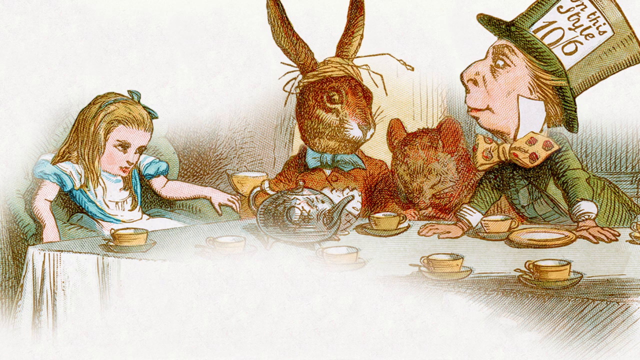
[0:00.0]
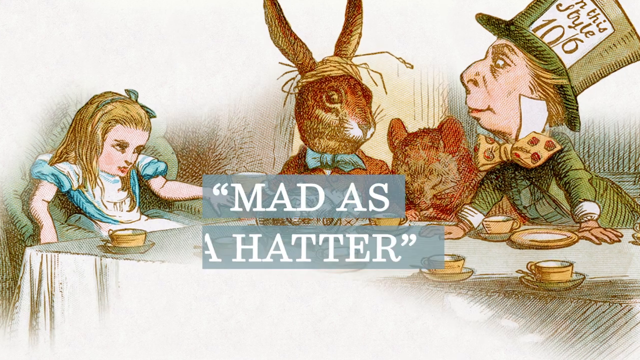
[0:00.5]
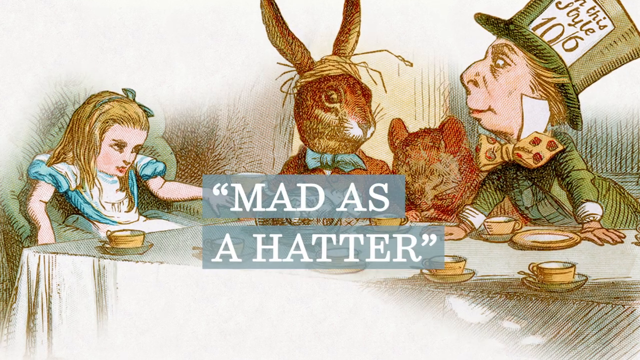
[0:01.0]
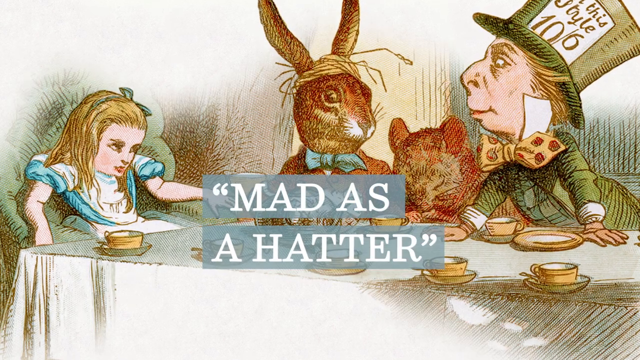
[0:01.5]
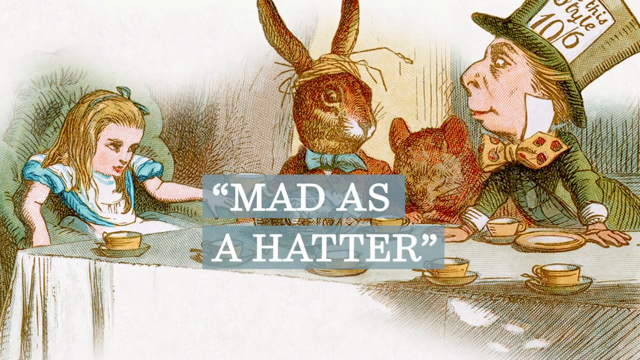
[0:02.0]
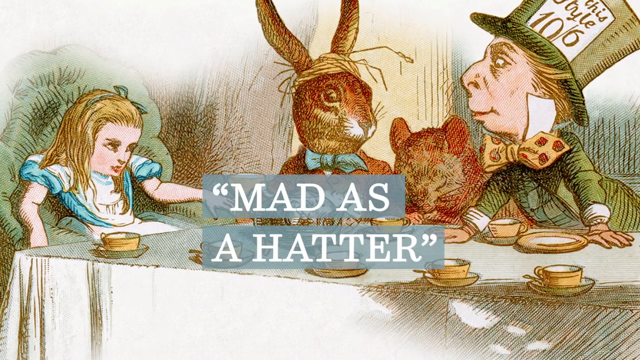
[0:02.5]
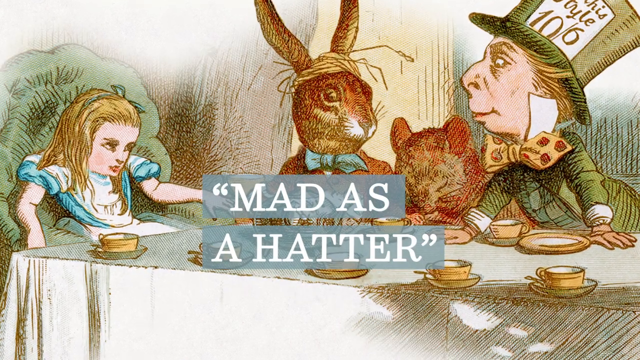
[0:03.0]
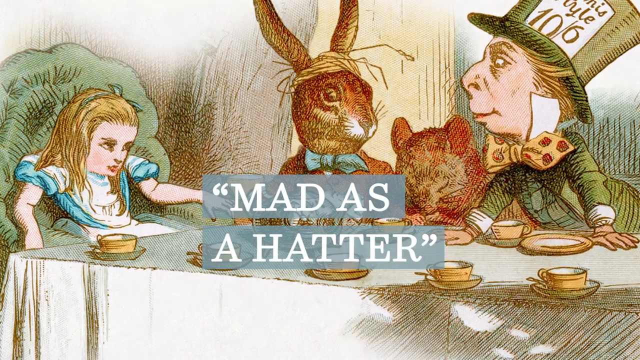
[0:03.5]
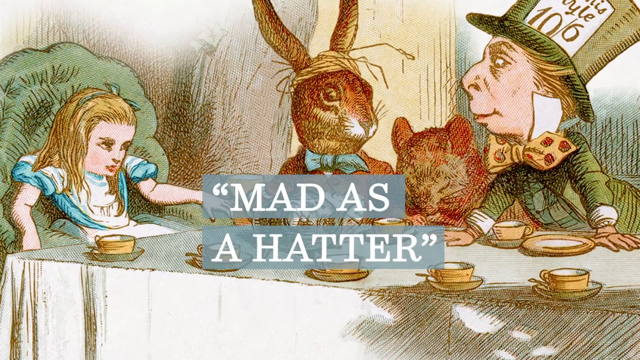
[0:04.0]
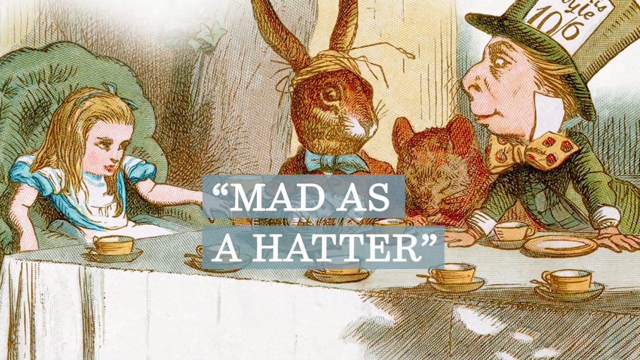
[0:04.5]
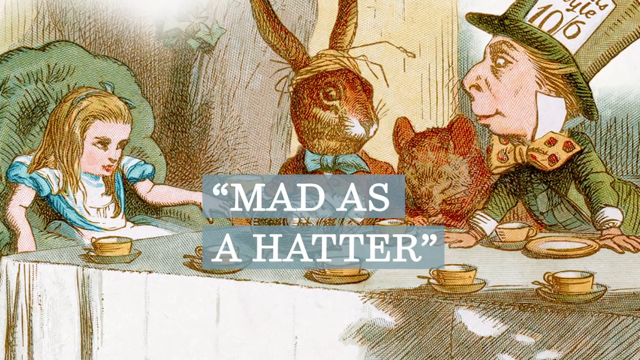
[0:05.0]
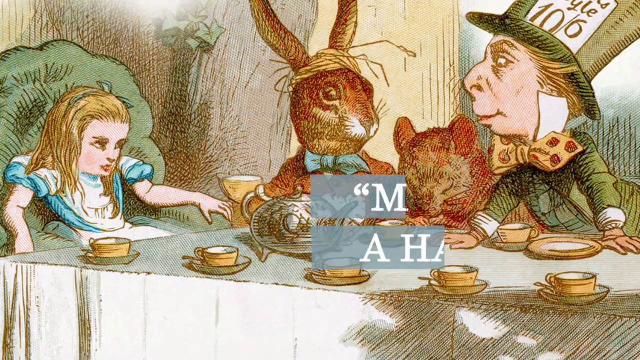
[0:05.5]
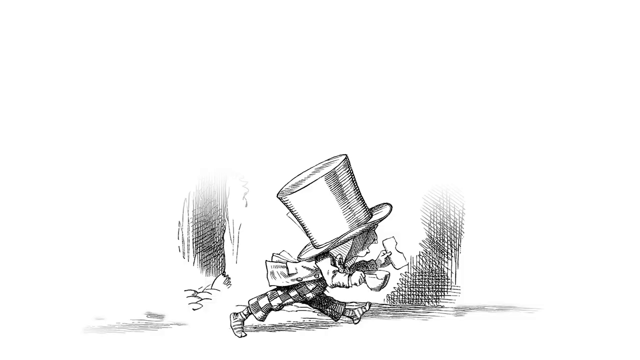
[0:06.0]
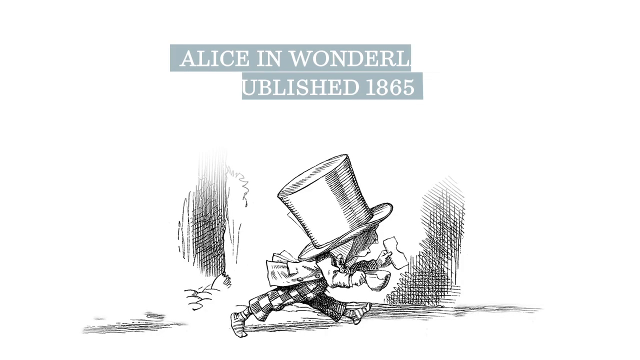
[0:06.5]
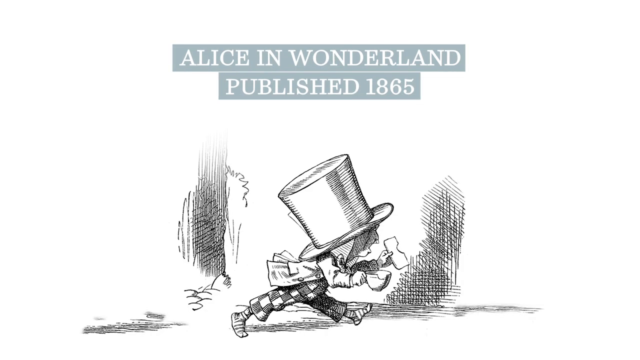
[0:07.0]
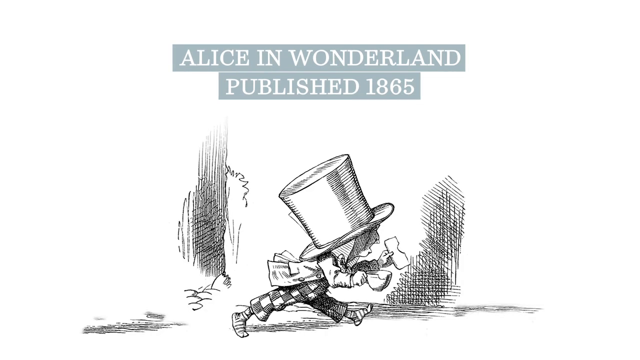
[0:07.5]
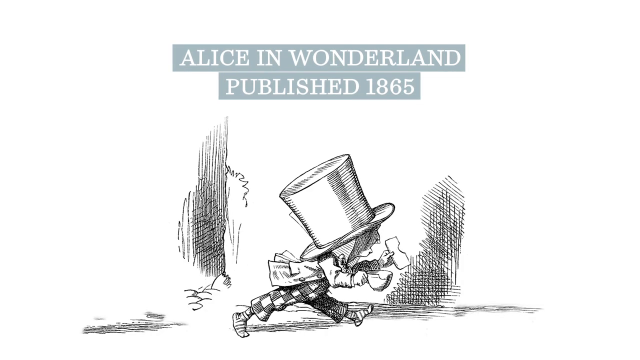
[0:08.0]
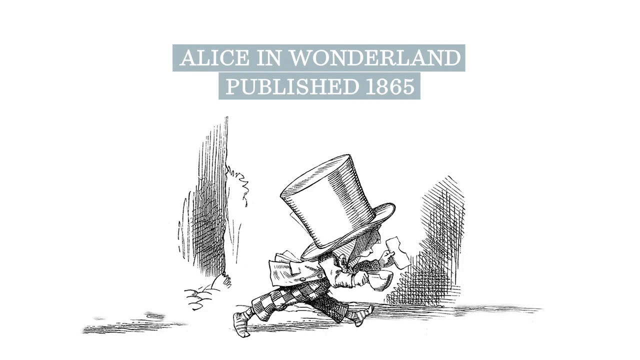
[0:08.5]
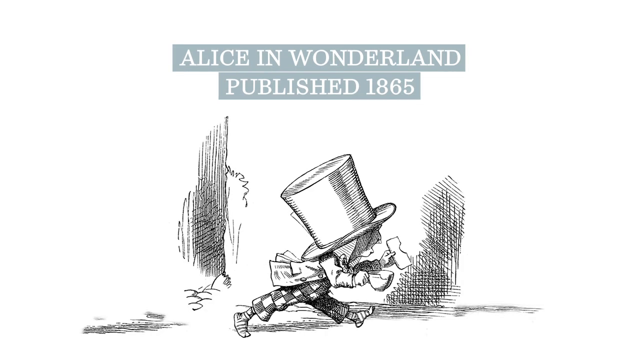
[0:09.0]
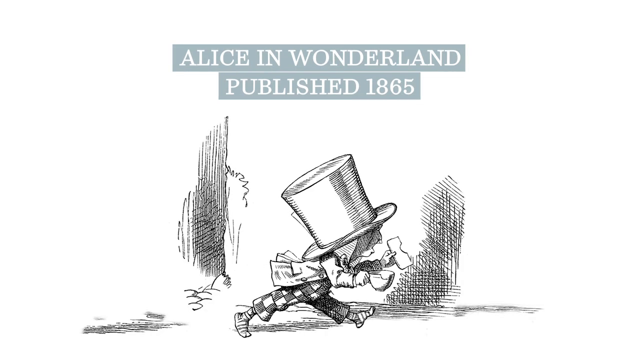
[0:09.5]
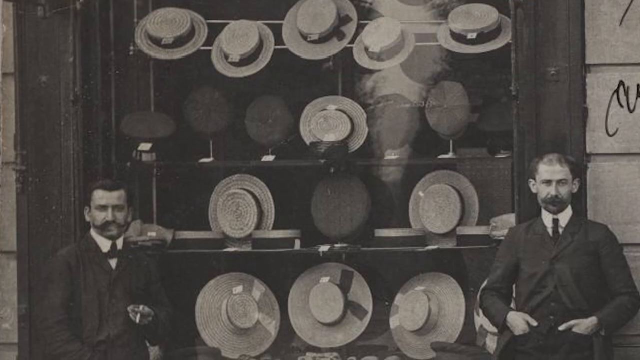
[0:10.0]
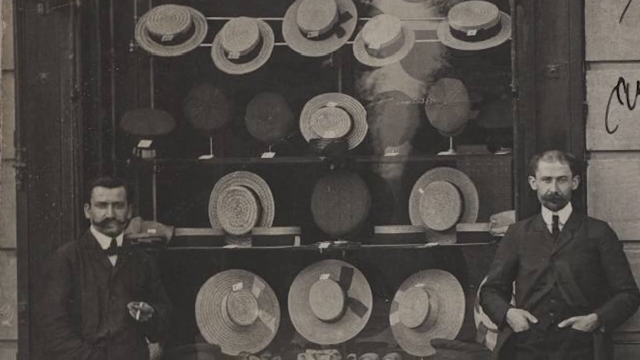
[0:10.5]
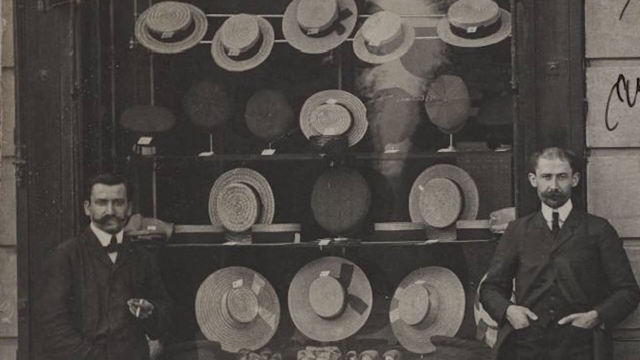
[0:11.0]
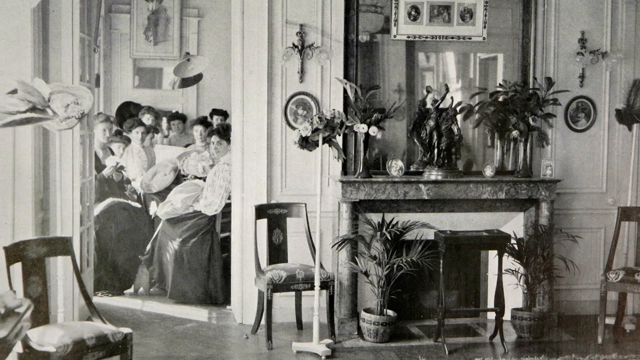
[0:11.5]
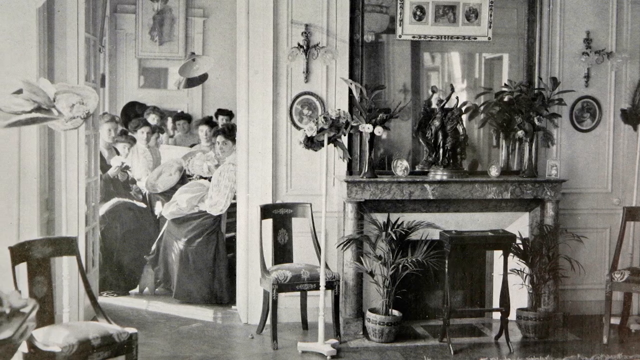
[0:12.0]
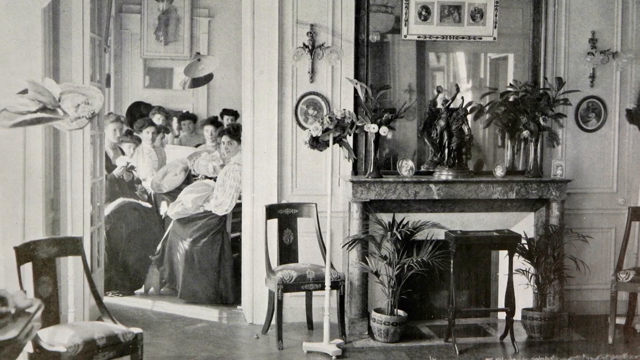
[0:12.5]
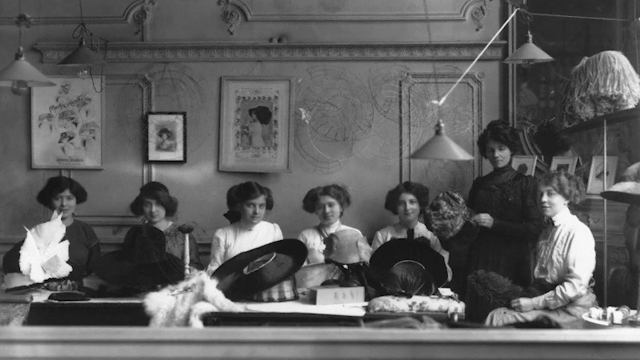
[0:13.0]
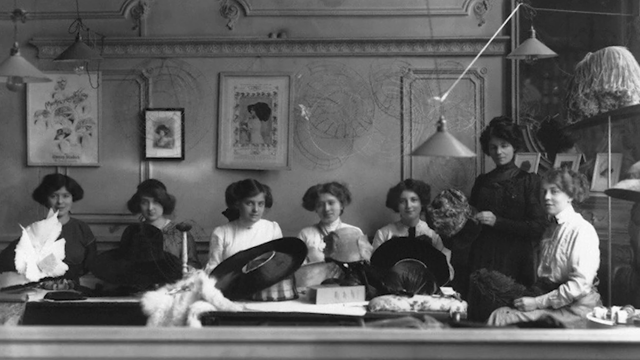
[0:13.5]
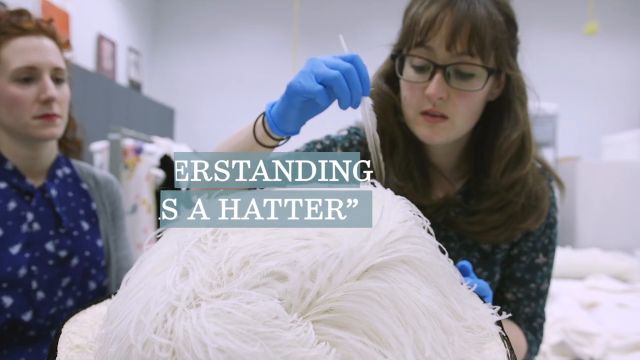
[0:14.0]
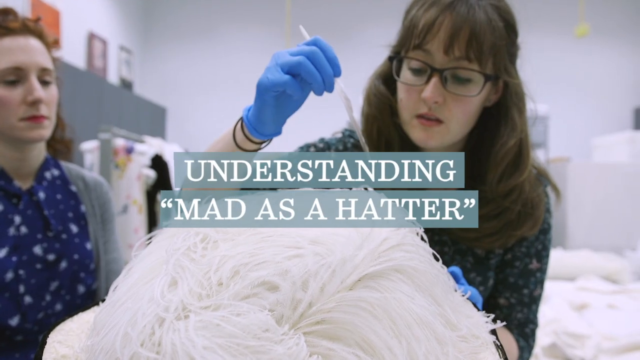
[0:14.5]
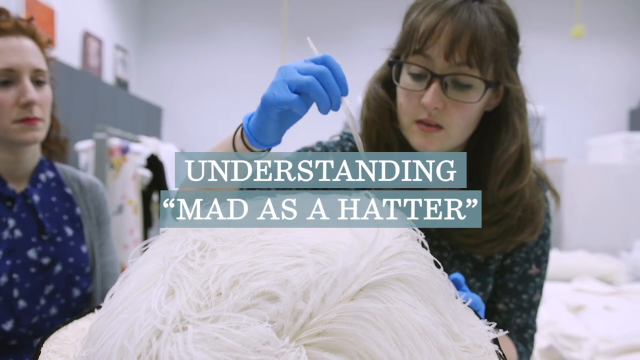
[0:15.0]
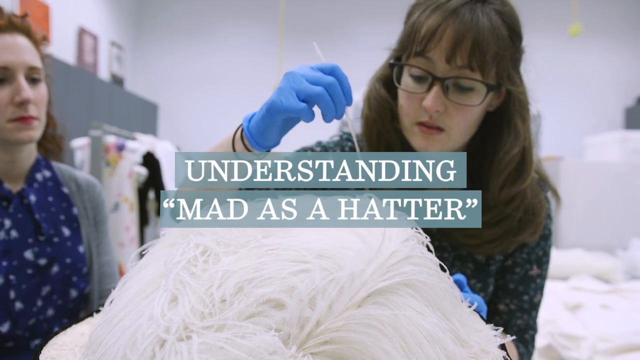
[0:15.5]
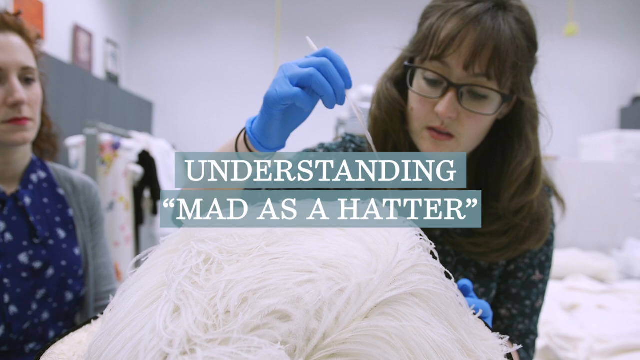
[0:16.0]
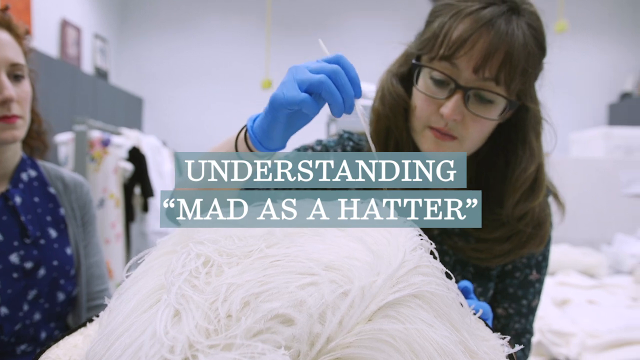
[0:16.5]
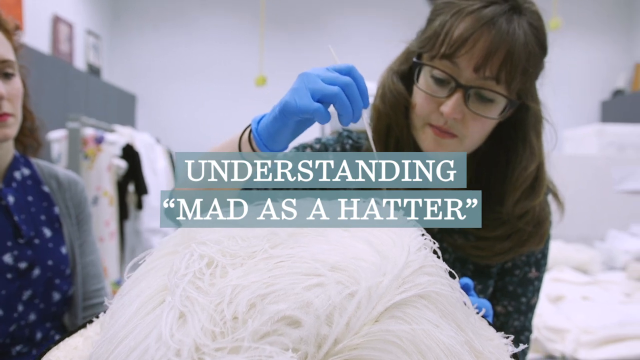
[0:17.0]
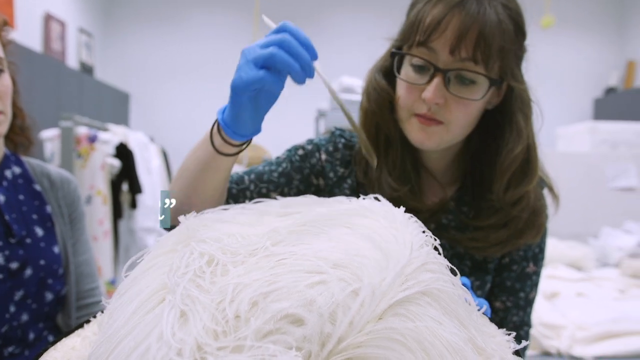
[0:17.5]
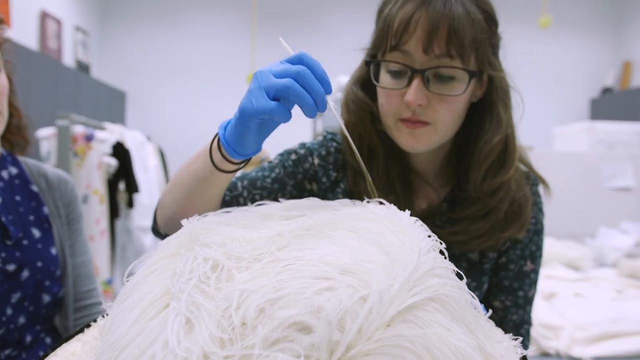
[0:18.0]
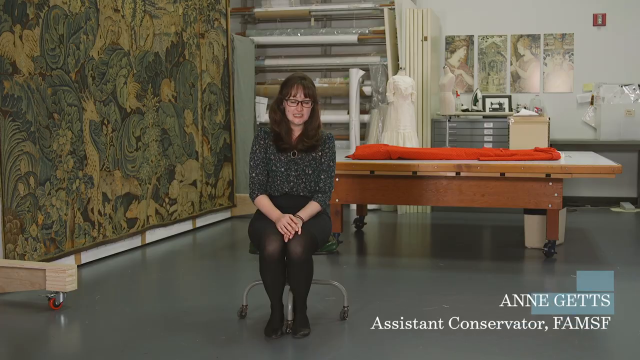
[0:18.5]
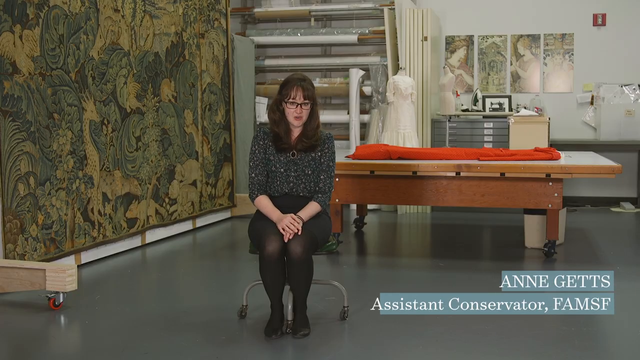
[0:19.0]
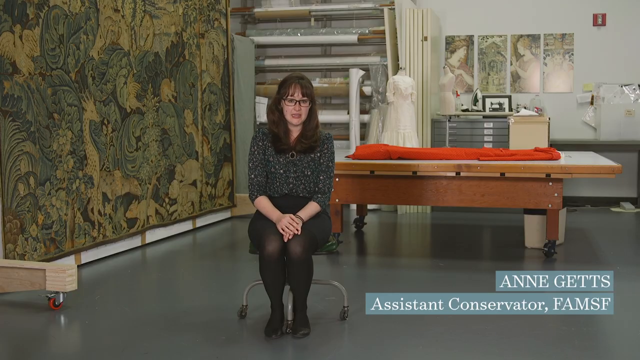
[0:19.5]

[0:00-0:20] A colored sketch from the Alice in Wonderland books shows Alice sitting on a chair. Next to her are a bunny and the Mad Hatter; the Mad Hatter seems to be looking at Alice while the other animals look at the Mad Hatter. There are teacups on the table, and a text highlight in the middle of the frame reads "Mad as a Hatter." The picture moves slightly so that it becomes slightly animated, and the Mad Hatter's head nods downward. The next scene is a black-and-white sketch of the Mad Hatter wearing a large stovetop hat, checkered pants and a jacket, holding a teacup in one hand and something else in his other hand; it carries the title "Alice in Wonderland published in 1865." It then cuts to a black-and-white photograph, apparently from the early 20th century, of two men outside a hat store or hat shop; both men have mustaches. Another scene shows a Victorian or Edwardian home with a large mirror in which the reflection of the women in the room can be seen. There is a fireplace with a very elaborate mantel, a lot of home decor above the mantel, some houseplants, and portraits on the walls. Another picture shows a group of women in a hat store, all sitting down and wearing early 20th-century attire. The next scene is modern: a female costume maker wearing gloves creates some kind of costume, with text above reading "Understanding Mad as a Hatter." The woman is then in a room with fabric and rolls. She is identified as Anne Getts, an assistant conservator of FAMSF.